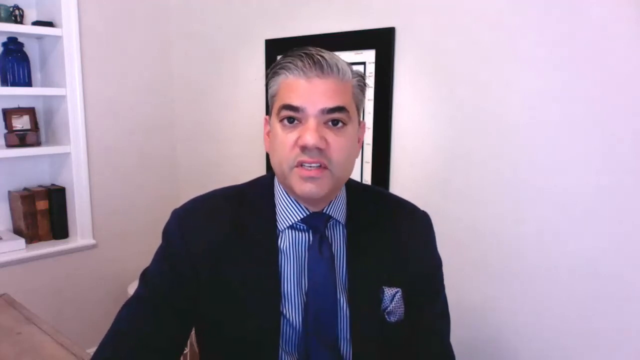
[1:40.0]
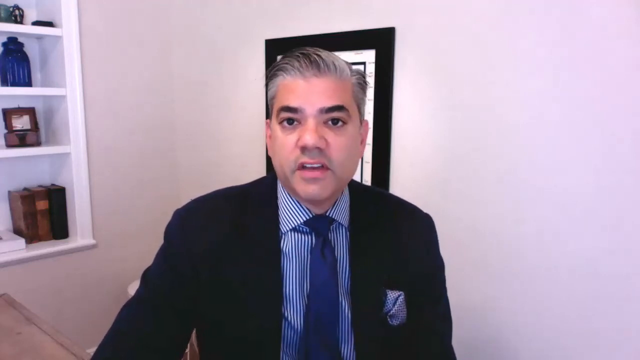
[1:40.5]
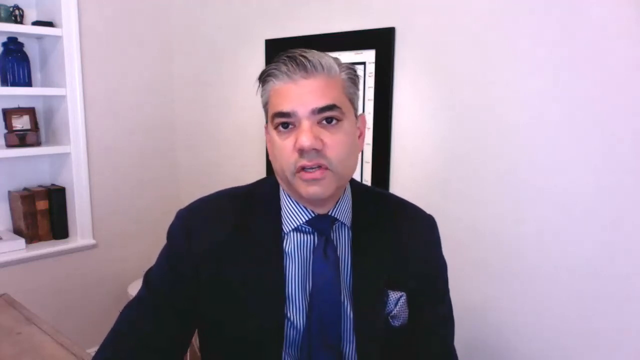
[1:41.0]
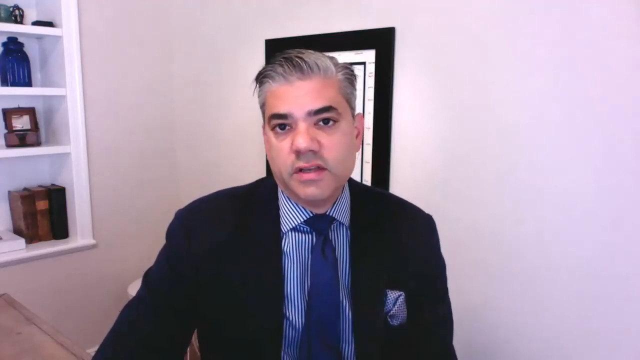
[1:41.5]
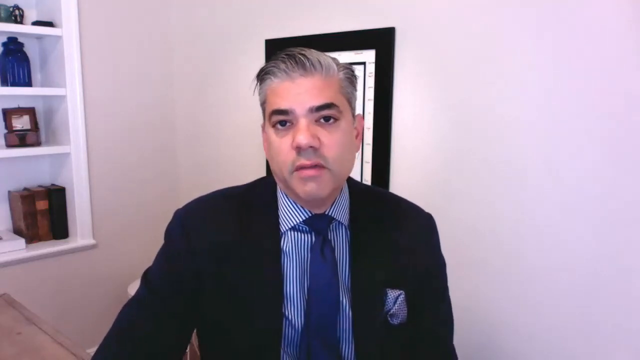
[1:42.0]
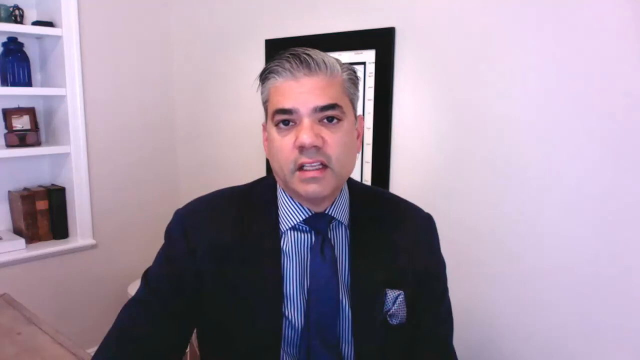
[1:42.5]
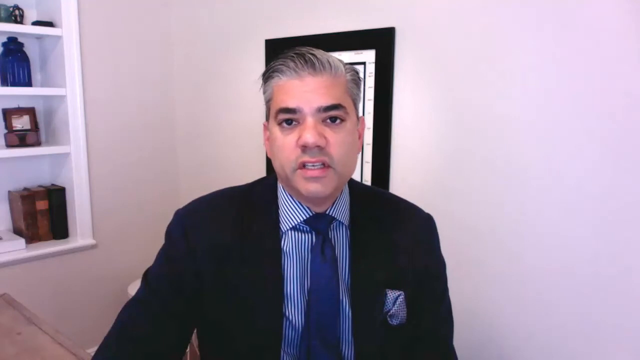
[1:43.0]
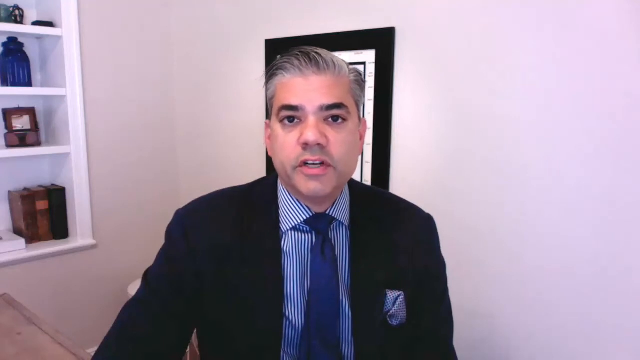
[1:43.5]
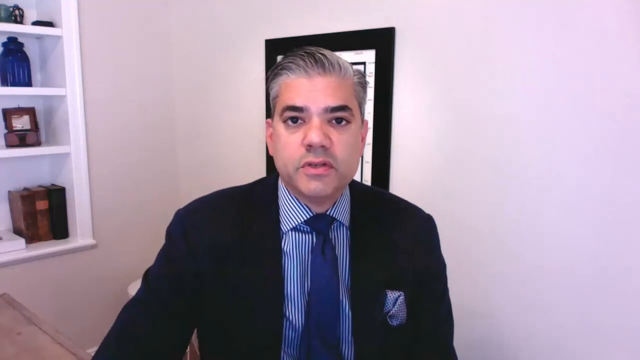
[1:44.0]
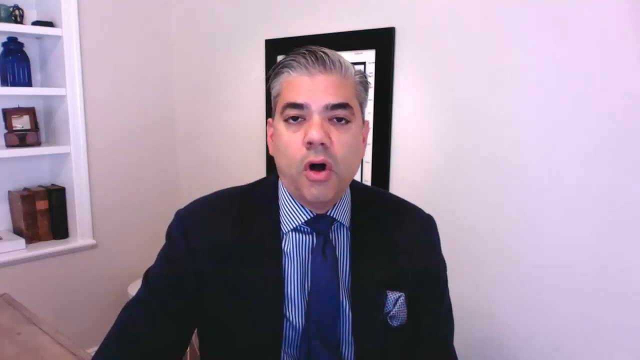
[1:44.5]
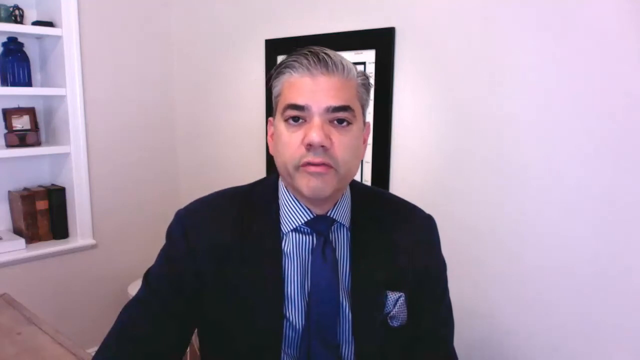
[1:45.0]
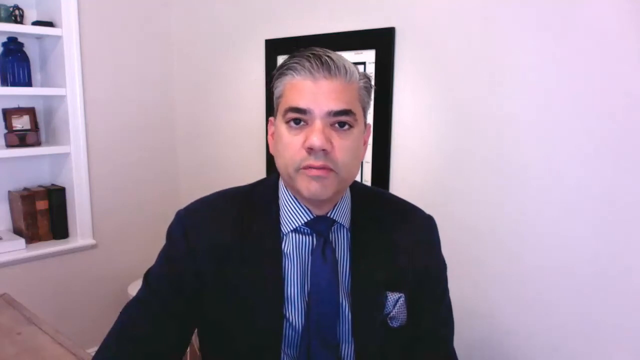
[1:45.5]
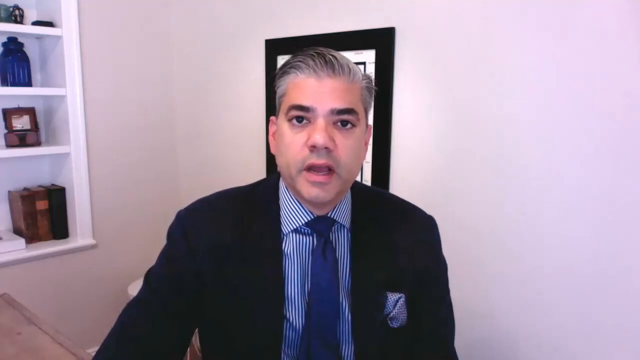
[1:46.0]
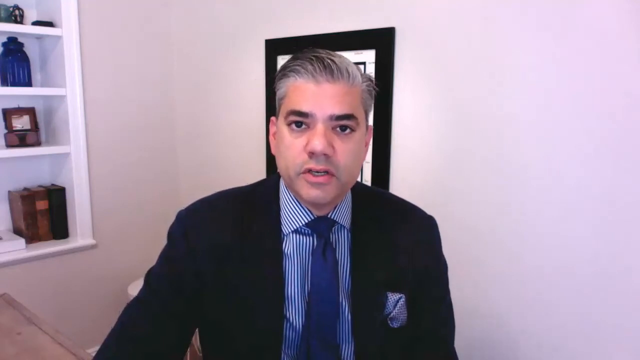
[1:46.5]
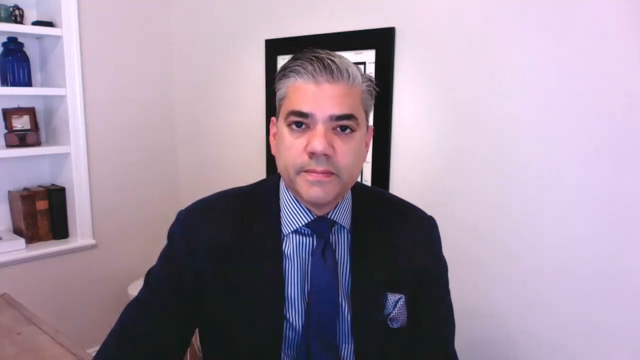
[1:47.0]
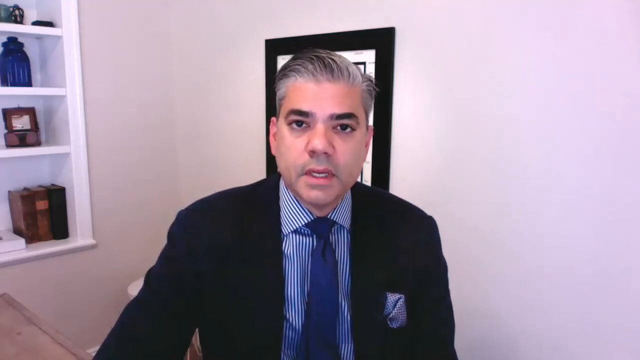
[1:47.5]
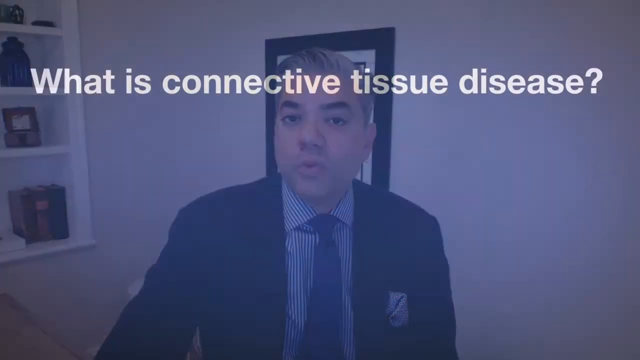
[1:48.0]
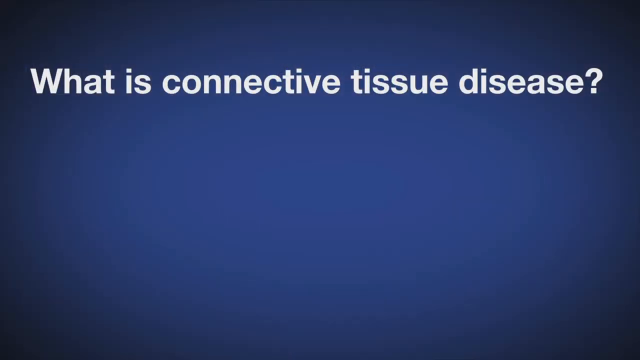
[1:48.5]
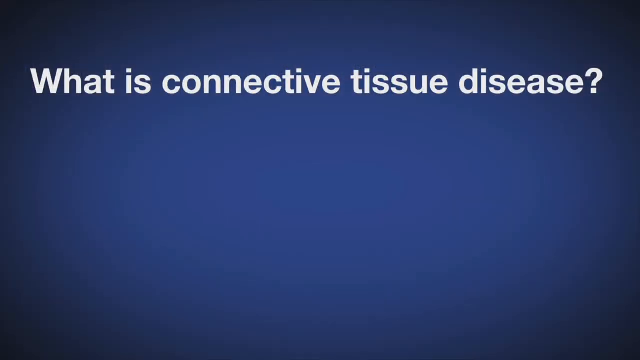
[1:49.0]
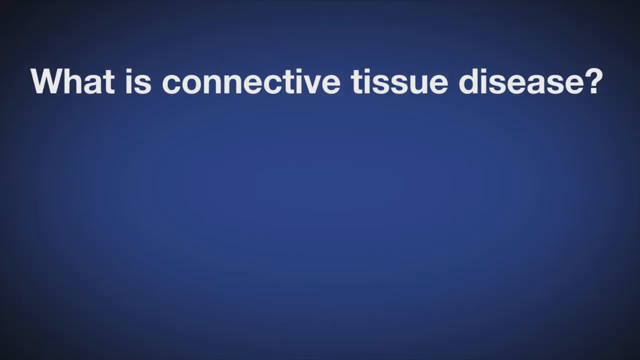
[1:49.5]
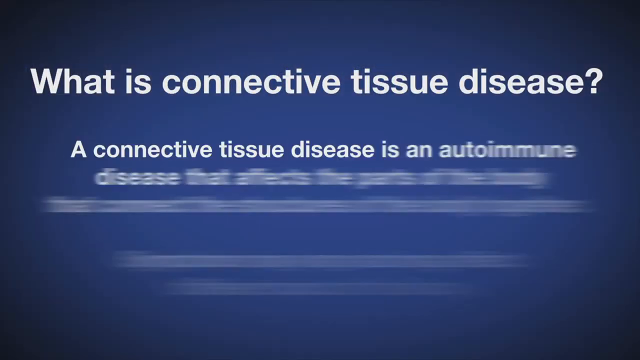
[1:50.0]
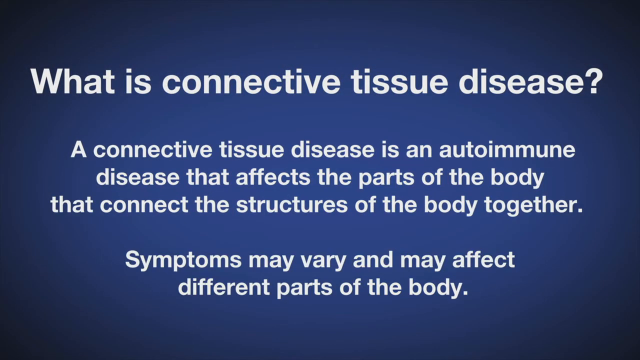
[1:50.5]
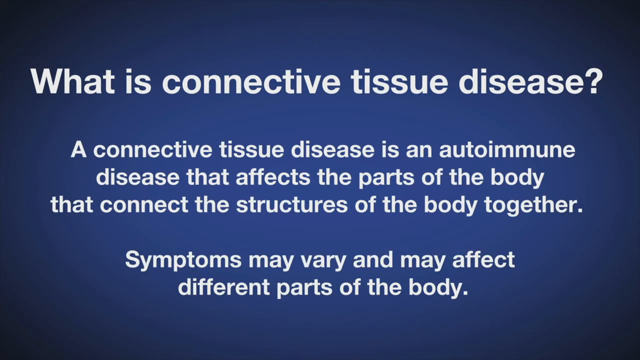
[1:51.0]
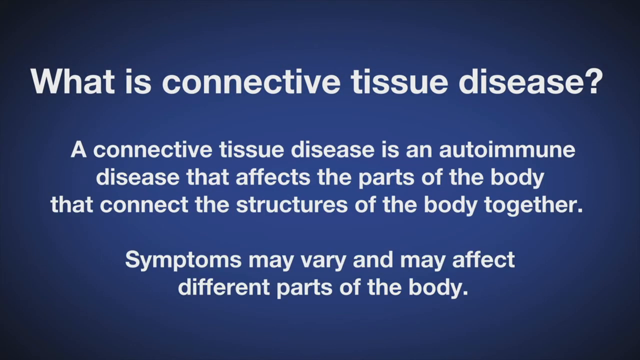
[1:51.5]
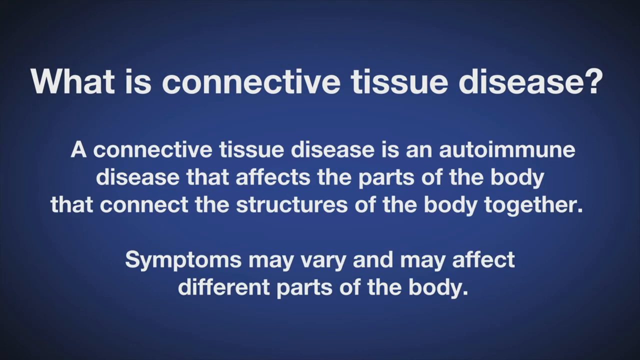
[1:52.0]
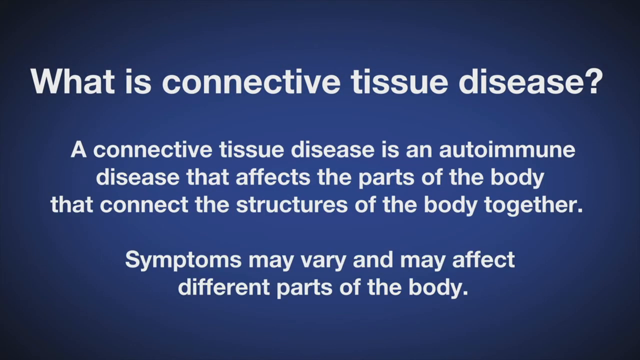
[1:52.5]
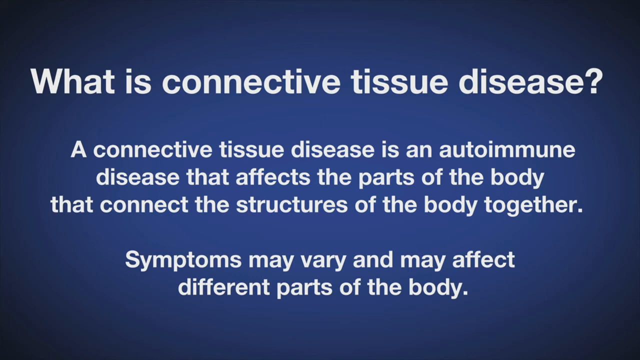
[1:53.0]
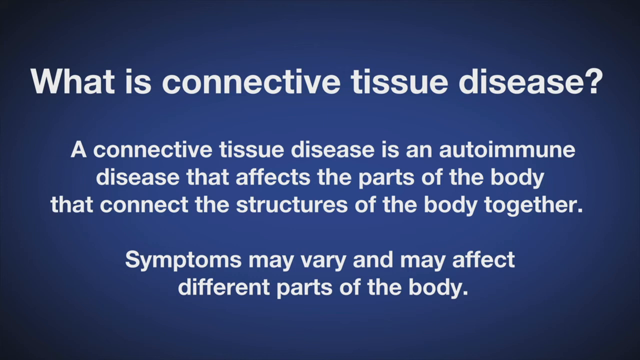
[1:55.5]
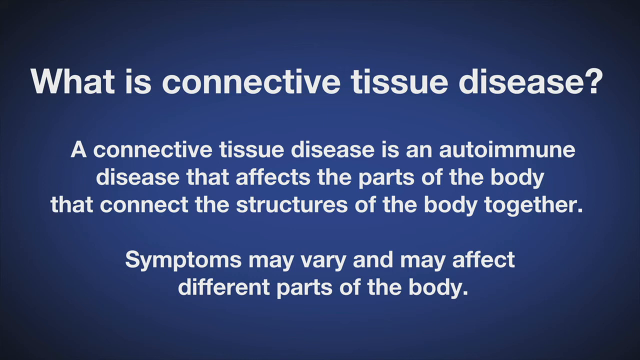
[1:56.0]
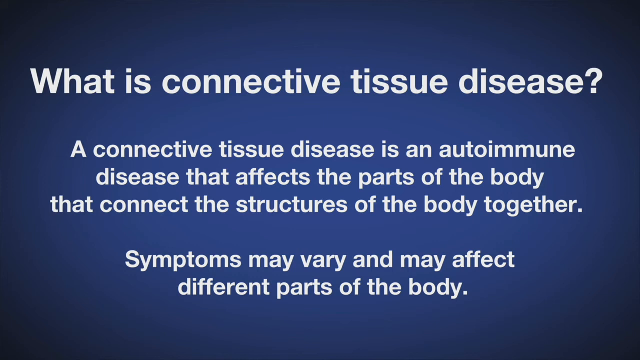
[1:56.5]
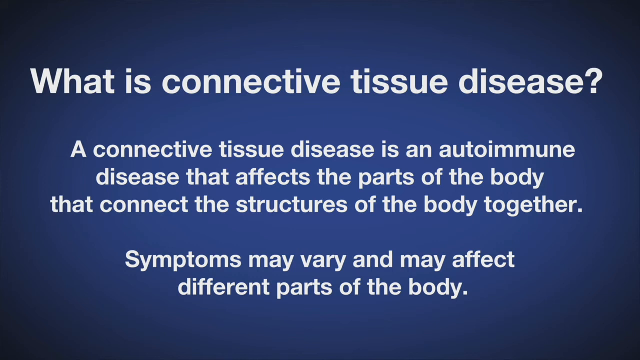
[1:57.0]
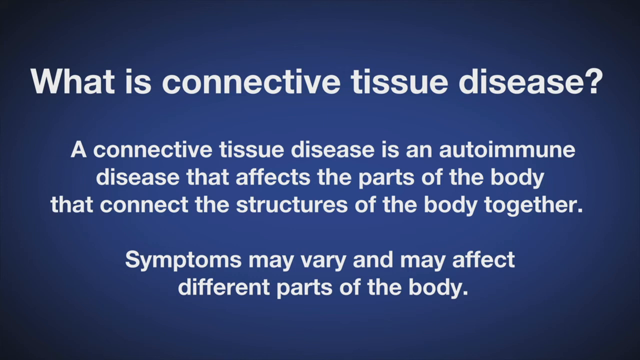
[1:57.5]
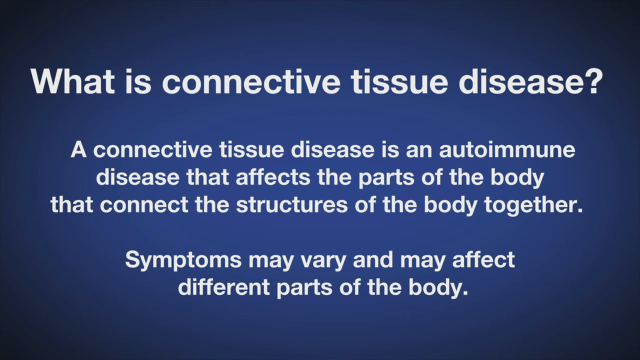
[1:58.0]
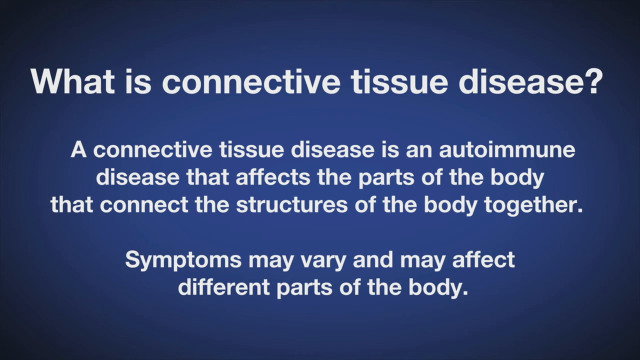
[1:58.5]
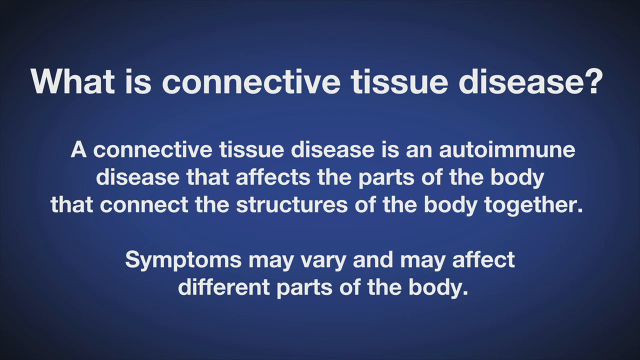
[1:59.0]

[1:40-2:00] The man, in a white striped shirt, talks in a pleasant, deliberate, matter-of-fact way while looking directly at the camera. After a little while the video transitions to a blue background with the large heading "what is connective tissue disease?" at the top of the screen. Underneath, more text appears, apparently answering the question: "a connective tissue disease is an autoimmune disease that affects the parts of the body that connect the structures of the body together. Symptoms may vary and may affect different parts of the body." The text stays on screen for about 12 seconds. The blue background darkens to black around the corners.